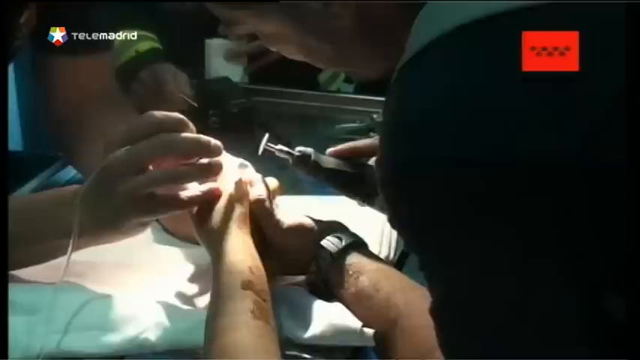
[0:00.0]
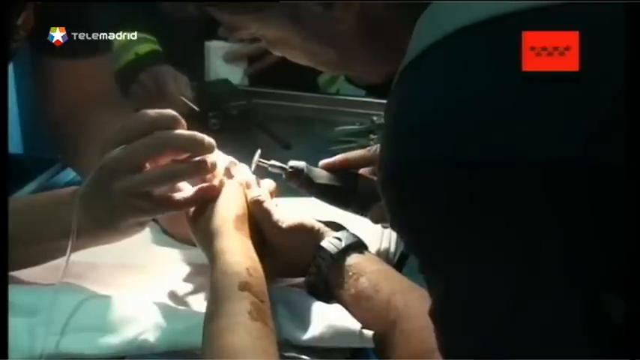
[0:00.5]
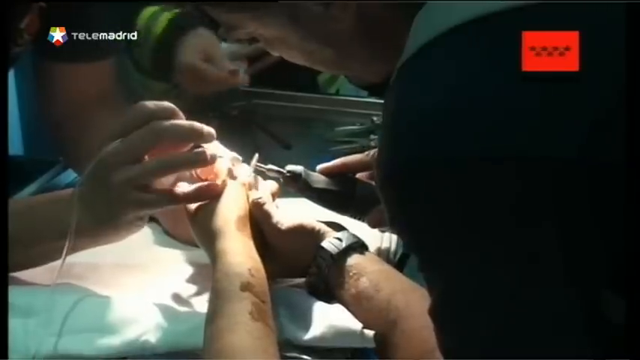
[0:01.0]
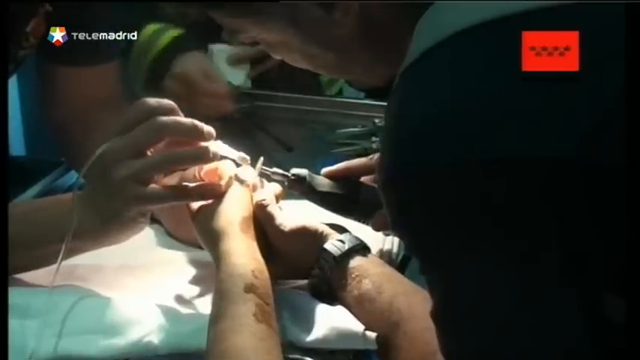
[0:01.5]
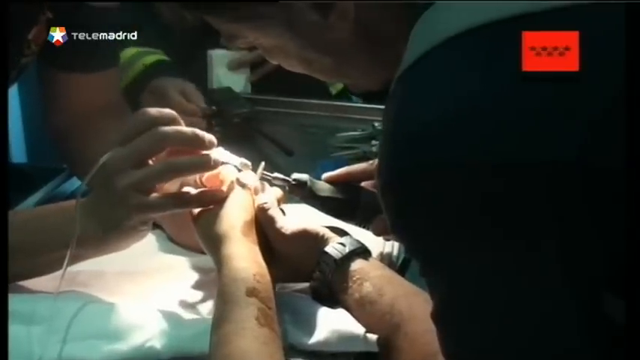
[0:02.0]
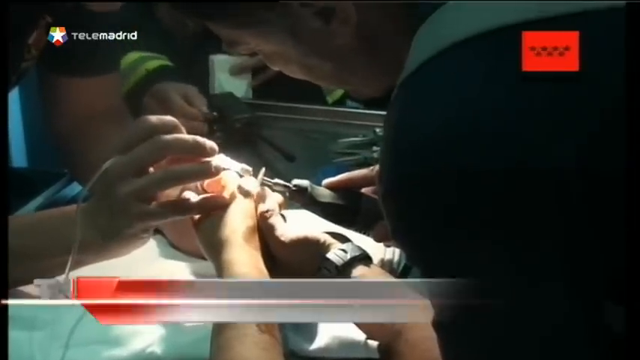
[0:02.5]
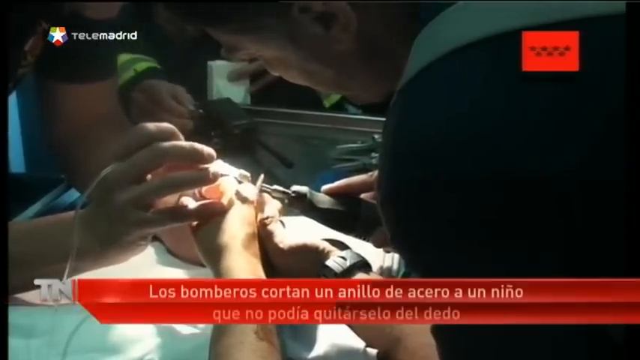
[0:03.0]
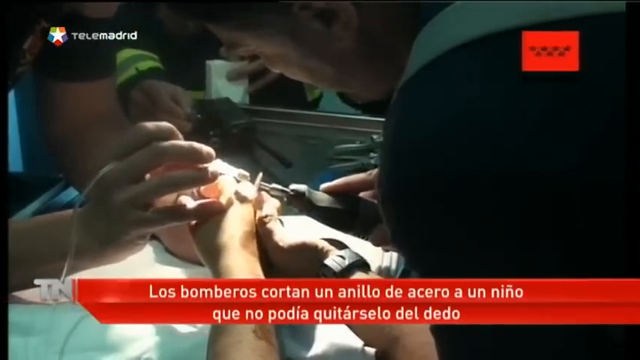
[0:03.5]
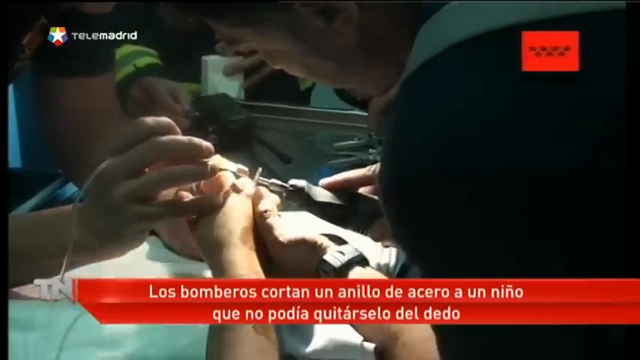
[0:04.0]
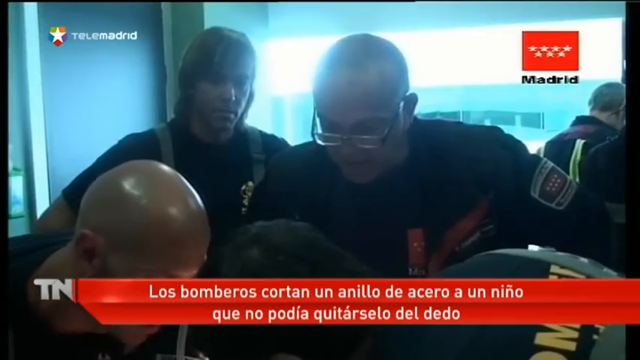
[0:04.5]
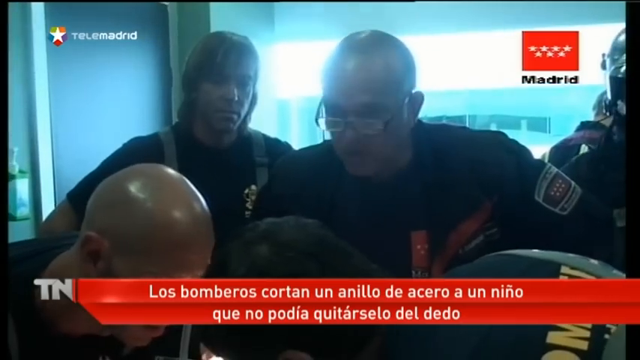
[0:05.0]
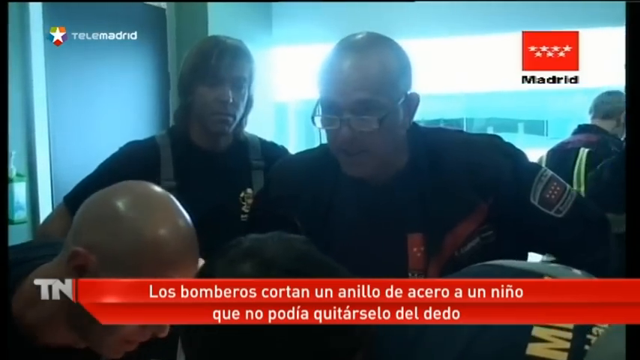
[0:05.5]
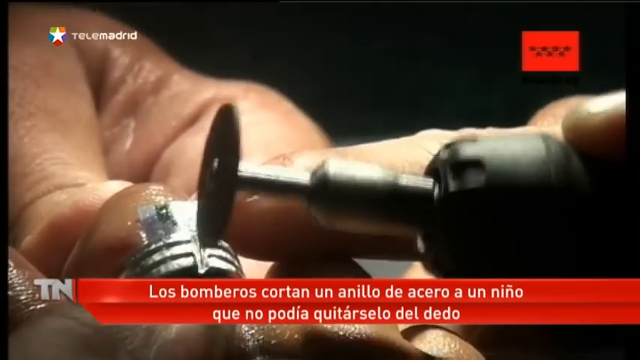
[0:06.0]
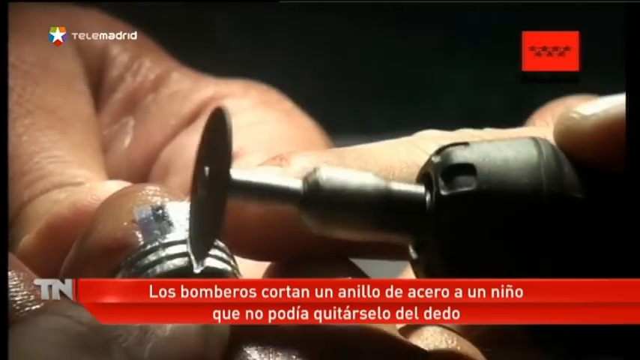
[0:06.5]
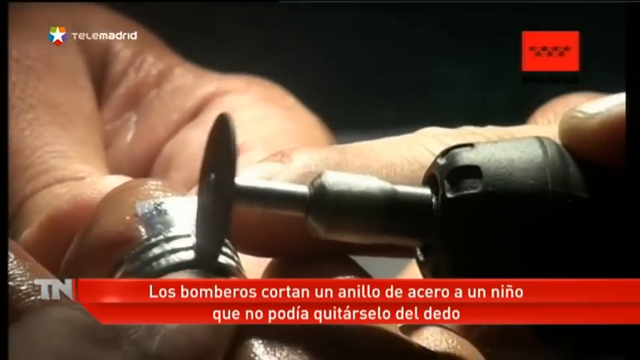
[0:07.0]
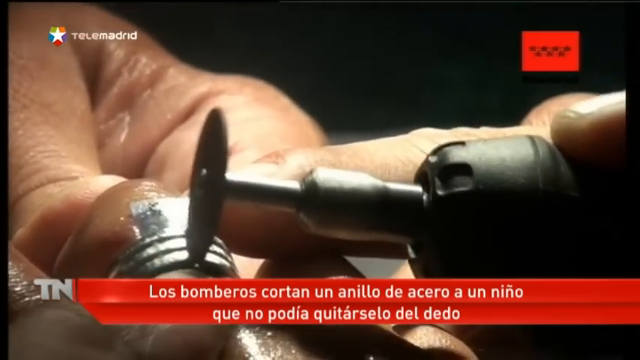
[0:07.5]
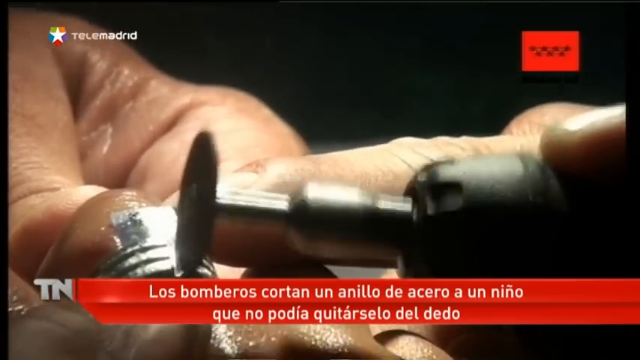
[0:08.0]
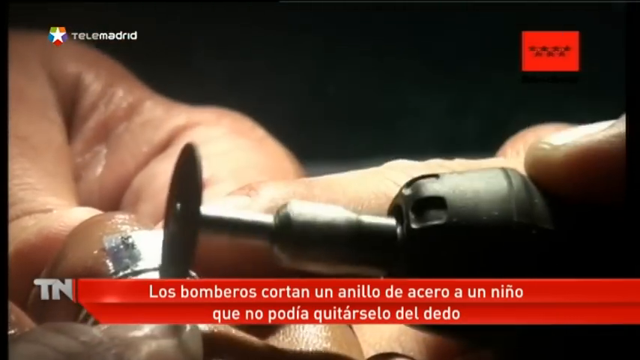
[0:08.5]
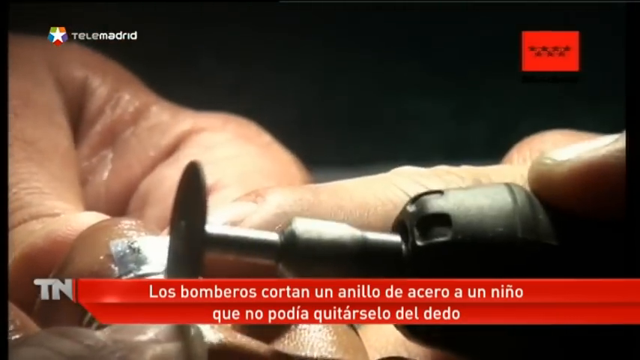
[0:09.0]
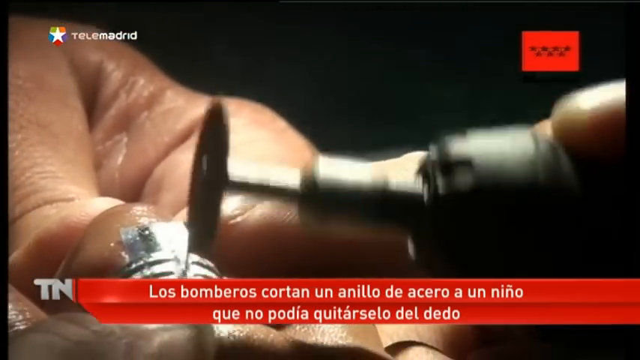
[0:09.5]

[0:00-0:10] What looks like a couple of men are on opposite sides of a tray, one on the left and one on the right. The man on the right is leaning over with his head facing down, and his left ear is visible. In his right hand he holds a tool with a black handle and a round circular saw, which he is using to cut something. The man on the left's face cannot be made out, but the bottom of his chin shows at the top of the screen. He wears a black short-sleeved shirt. A tube comes over his right hand and runs between his index finger and middle finger. His left arm comes down the screen, and only the bend of his elbow is visible. They appear to be sawing something. The view switches to show what they are sawing: it looks like a ring or a metal thing on somebody's finger. It is silver.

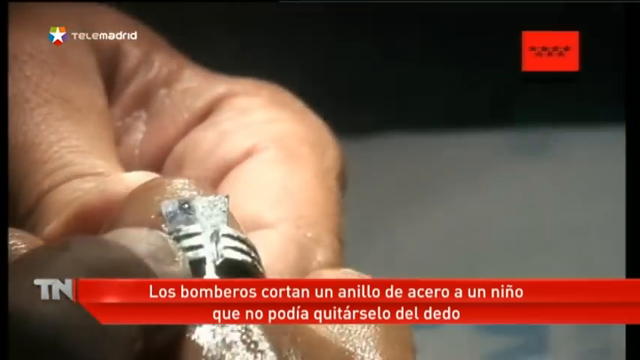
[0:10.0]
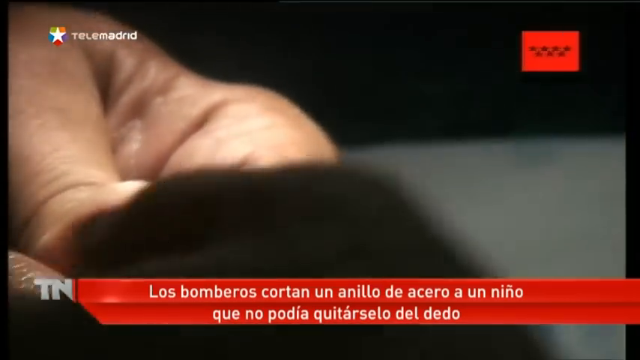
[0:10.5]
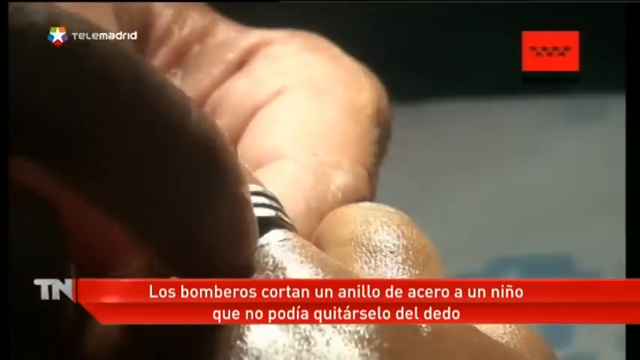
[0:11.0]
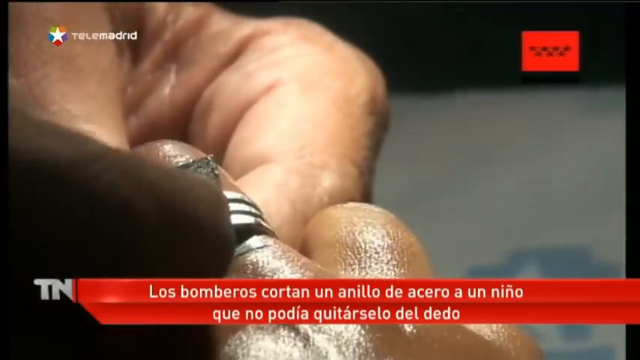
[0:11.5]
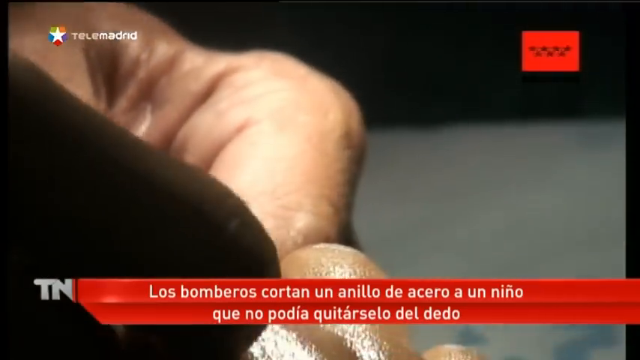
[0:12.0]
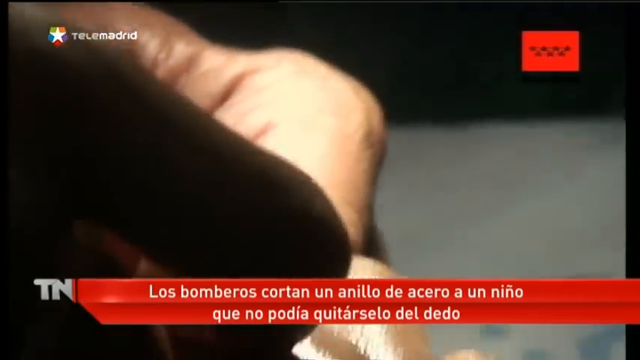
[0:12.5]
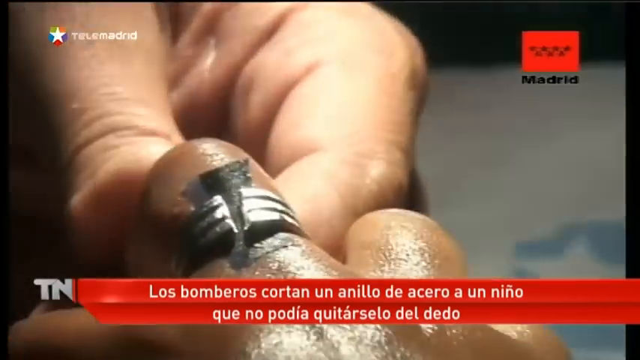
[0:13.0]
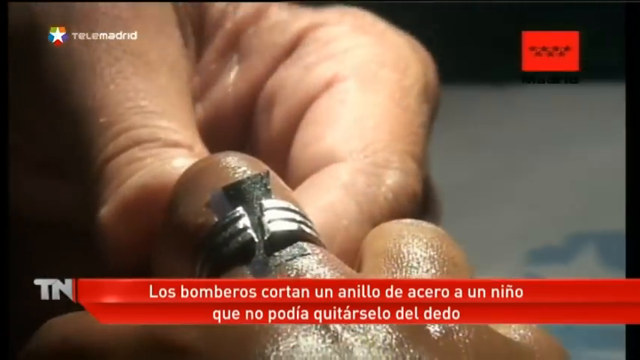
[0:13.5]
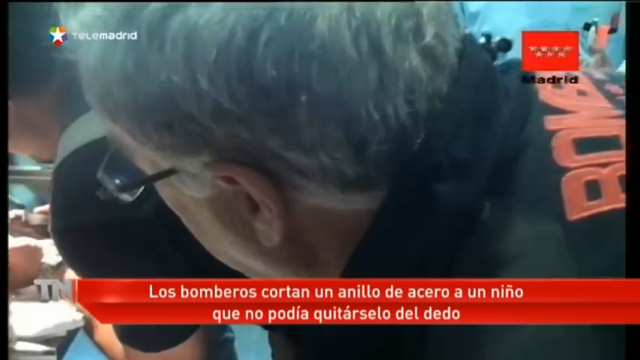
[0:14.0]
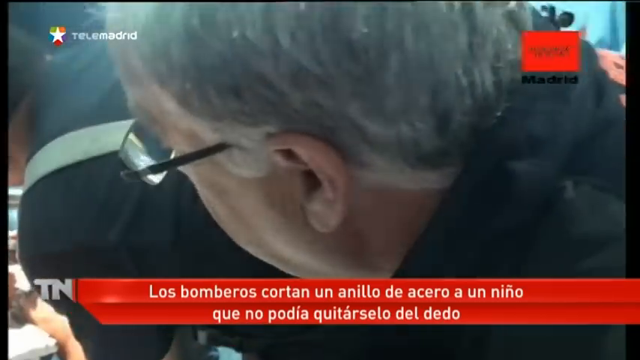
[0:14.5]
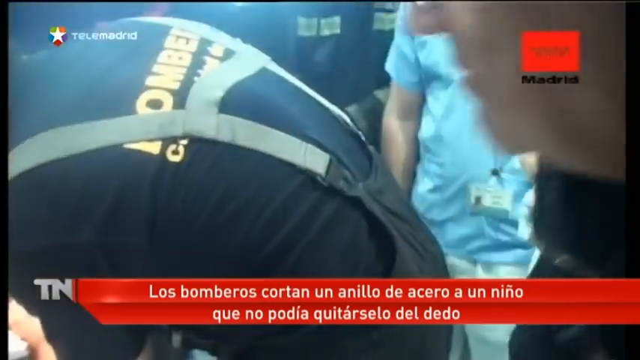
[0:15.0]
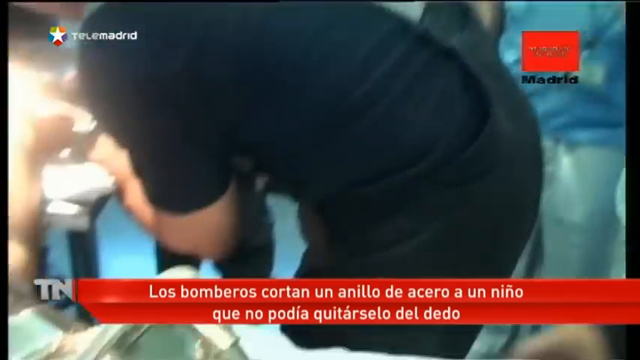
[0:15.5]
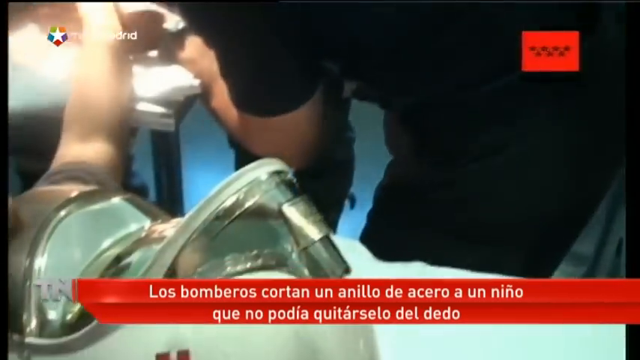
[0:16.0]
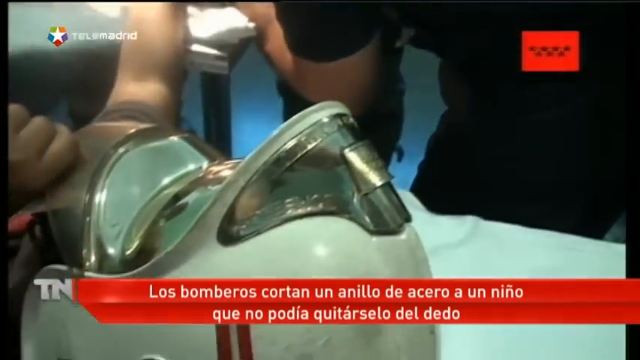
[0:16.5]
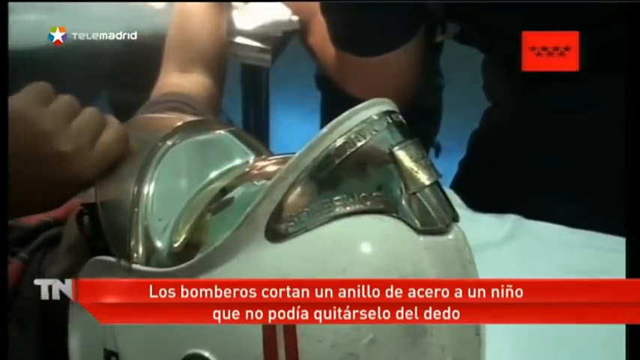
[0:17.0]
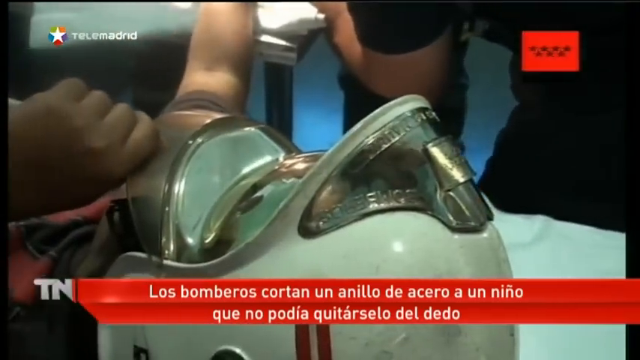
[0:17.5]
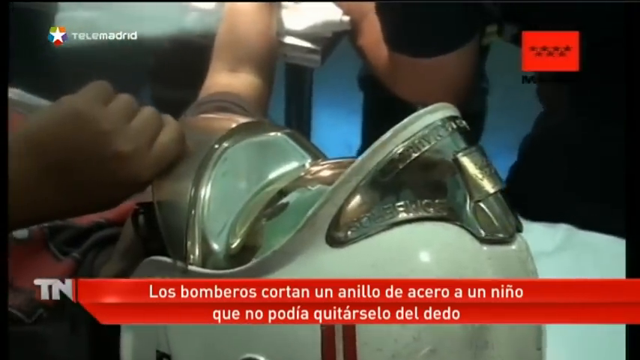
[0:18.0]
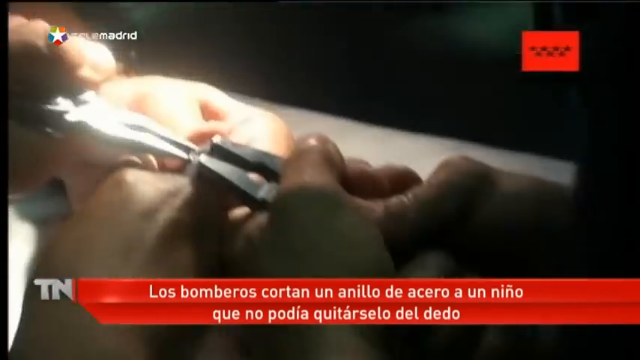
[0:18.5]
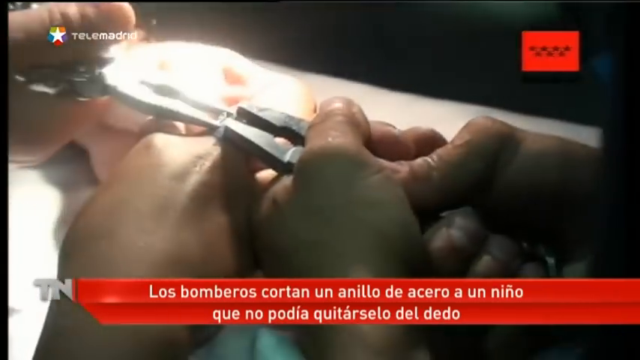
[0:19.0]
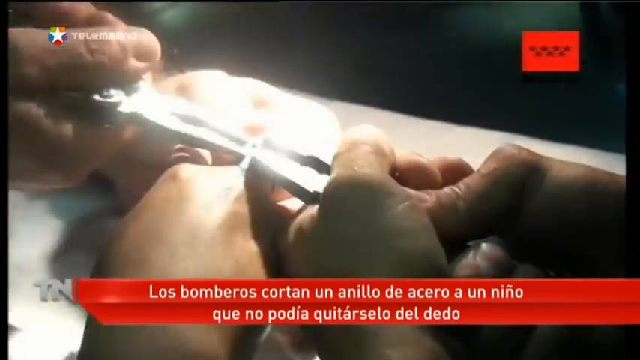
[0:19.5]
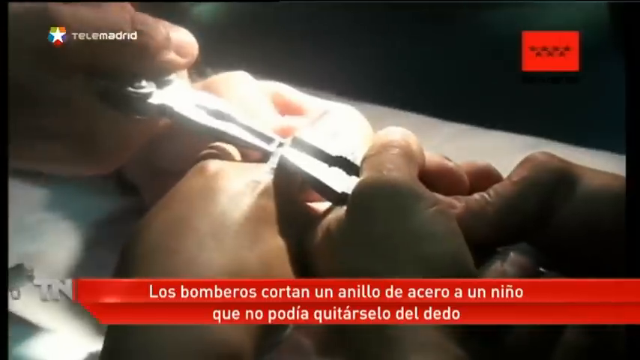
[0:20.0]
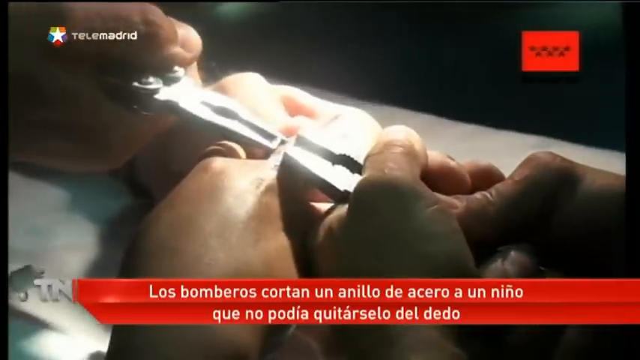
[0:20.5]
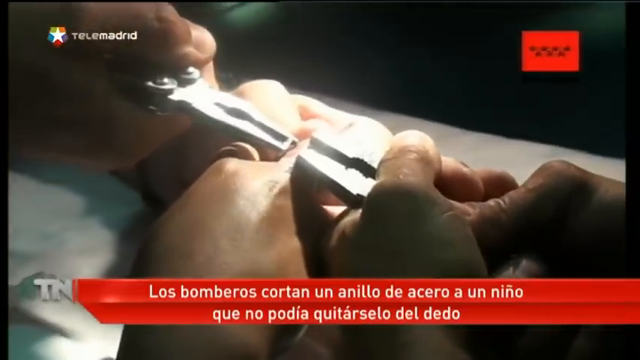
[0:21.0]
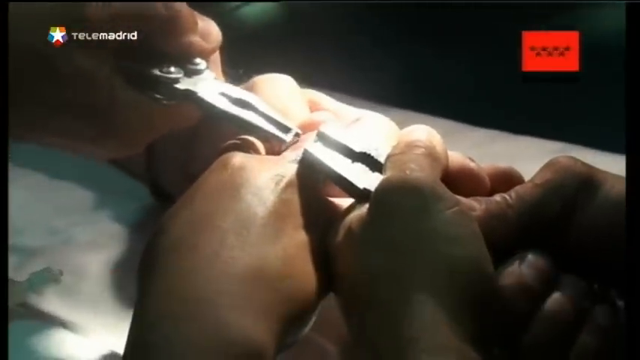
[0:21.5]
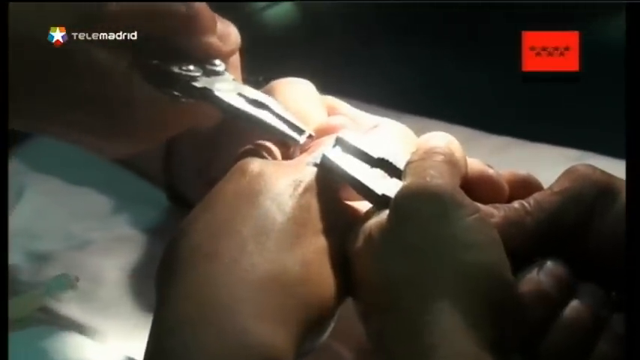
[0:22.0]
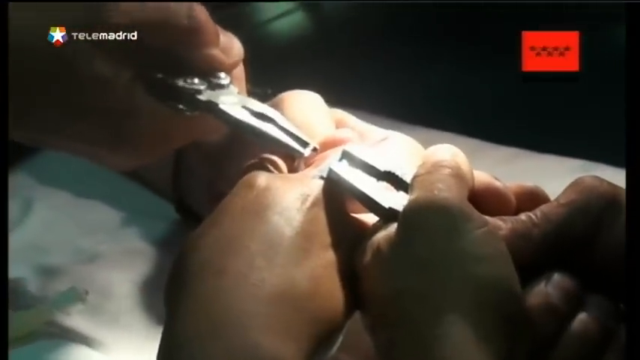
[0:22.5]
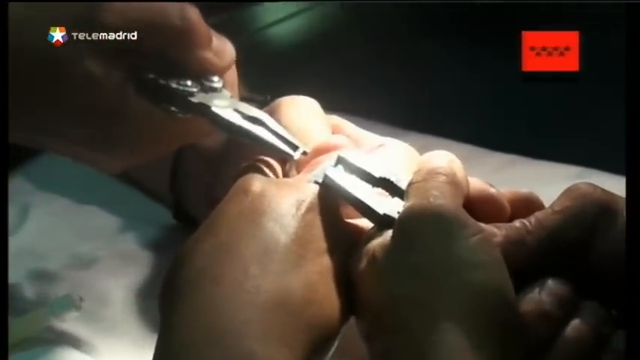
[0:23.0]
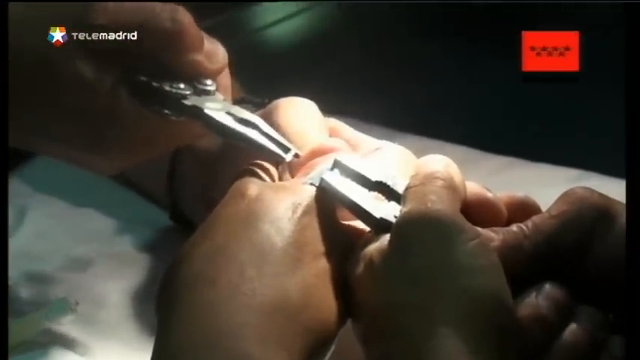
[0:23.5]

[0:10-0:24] A person's left hand holds a silver thing between the index finger and thumb. He reaches with his other index finger and thumb and pries at the silver thing, which is over a man's finger. They are trying to pry it off with two pairs of pliers: one set of hands is in the top left corner of the screen and another set is in the bottom right corner, each holding a pair of pliers clamped onto the silver thing, pulling and prying it apart off the man's finger. At the bottom of the screen is a red banner with white words, apparently written in Spanish or another language, which cannot be read.